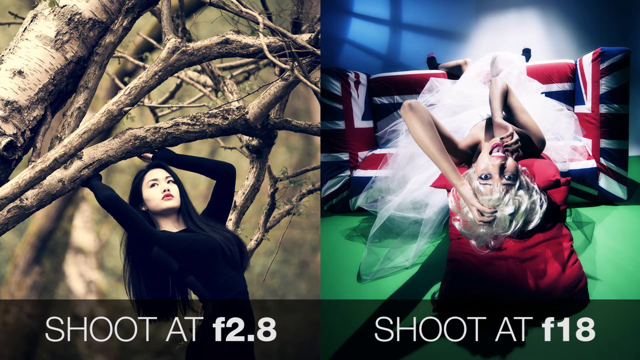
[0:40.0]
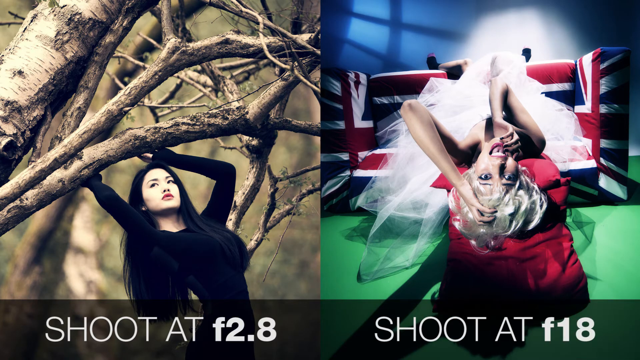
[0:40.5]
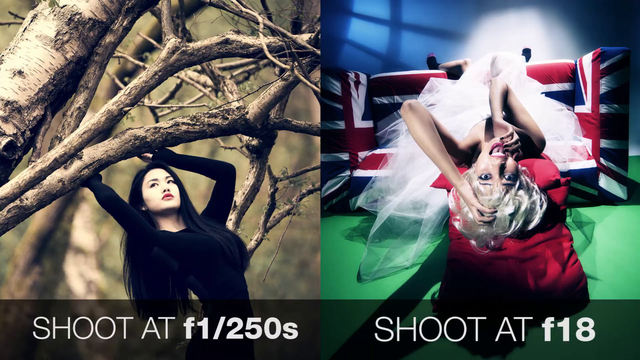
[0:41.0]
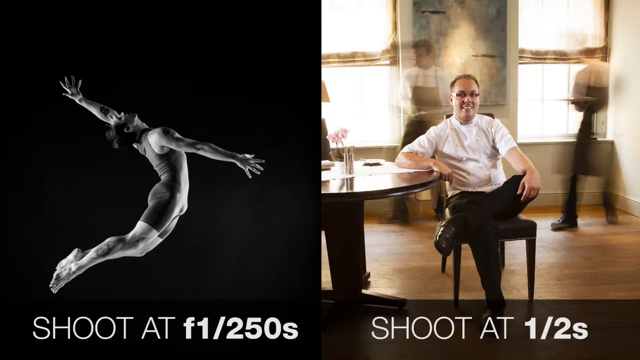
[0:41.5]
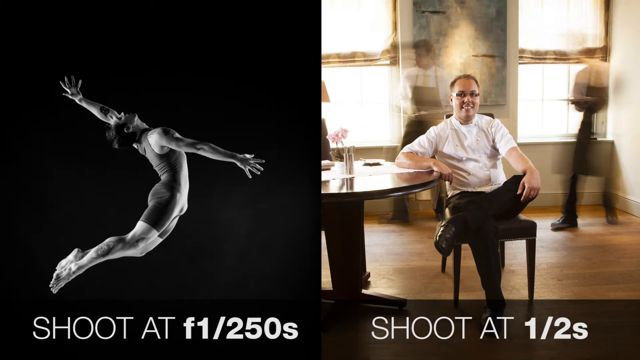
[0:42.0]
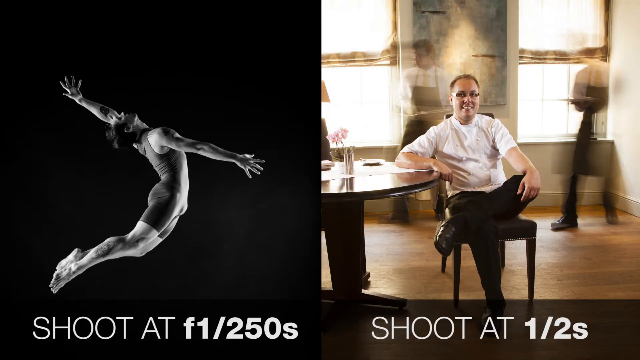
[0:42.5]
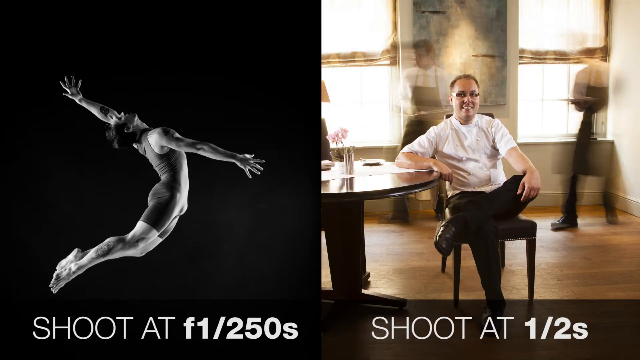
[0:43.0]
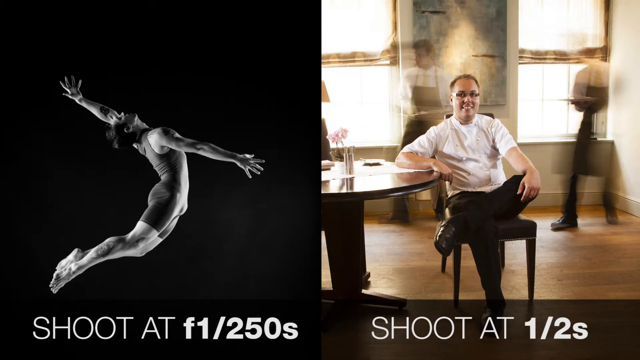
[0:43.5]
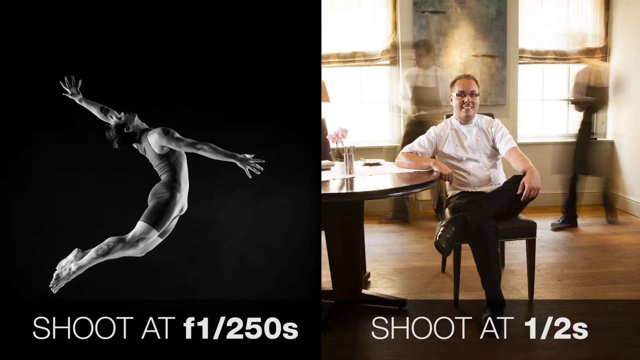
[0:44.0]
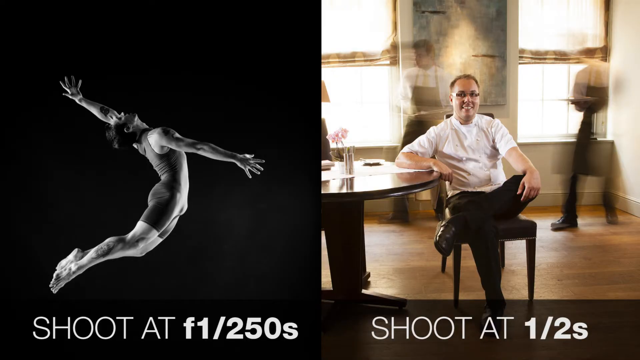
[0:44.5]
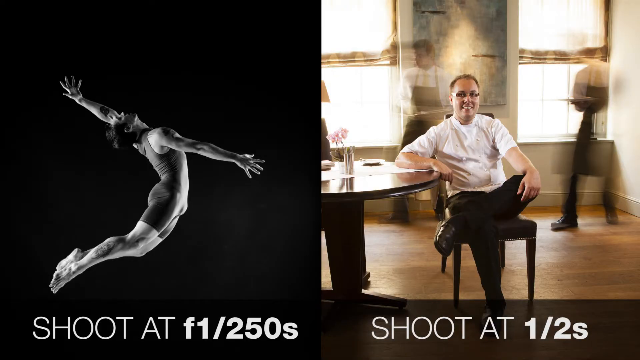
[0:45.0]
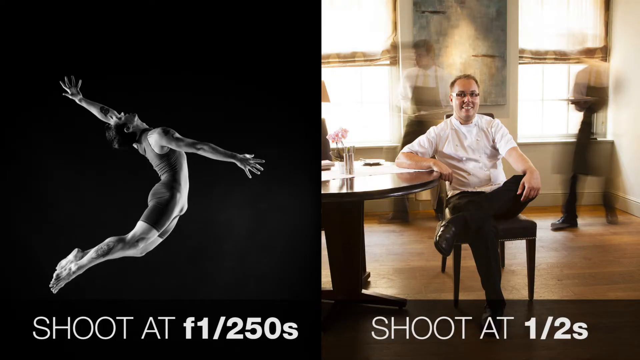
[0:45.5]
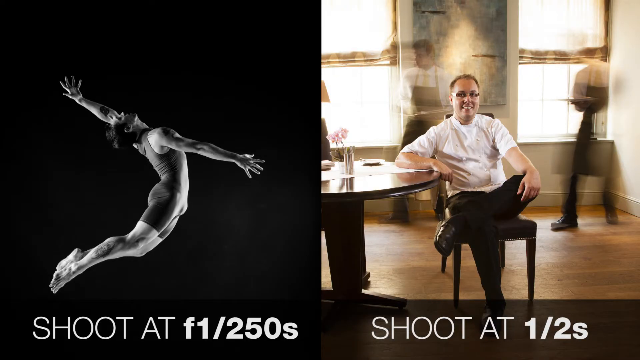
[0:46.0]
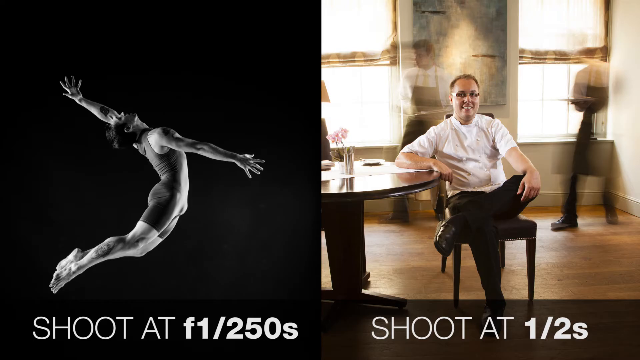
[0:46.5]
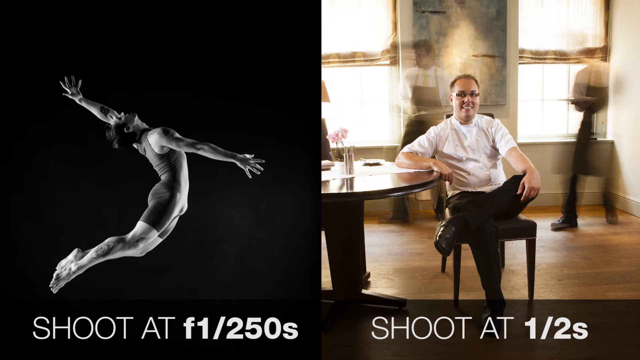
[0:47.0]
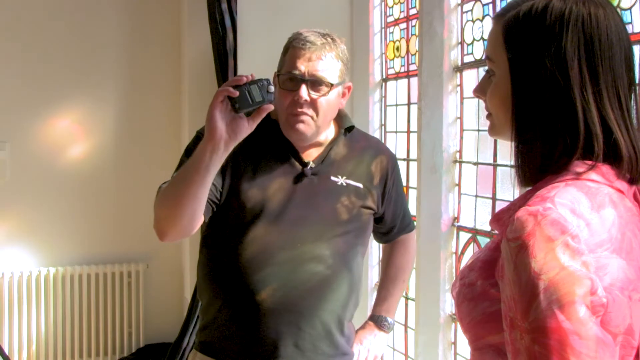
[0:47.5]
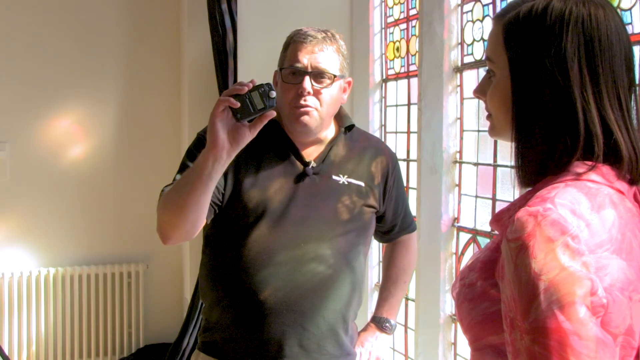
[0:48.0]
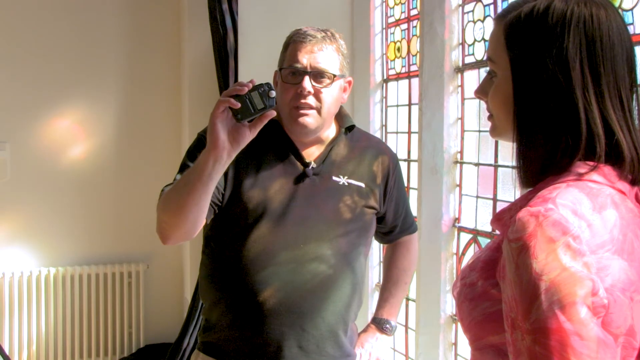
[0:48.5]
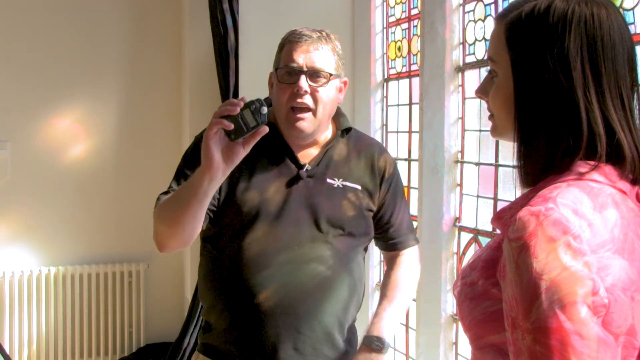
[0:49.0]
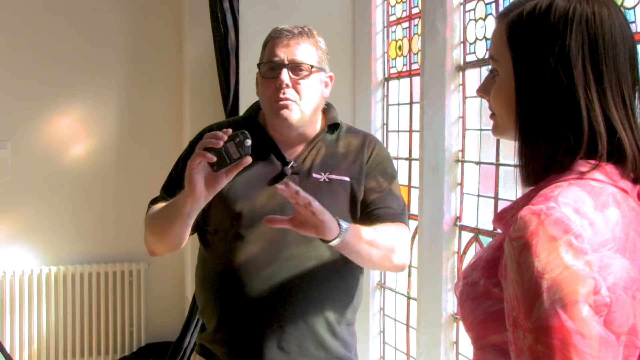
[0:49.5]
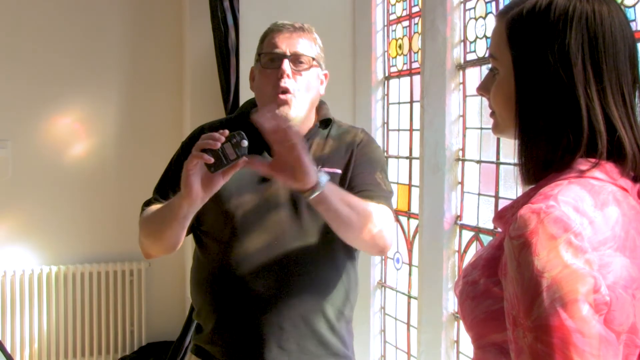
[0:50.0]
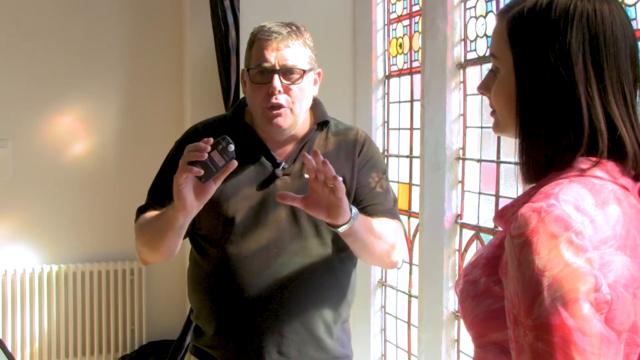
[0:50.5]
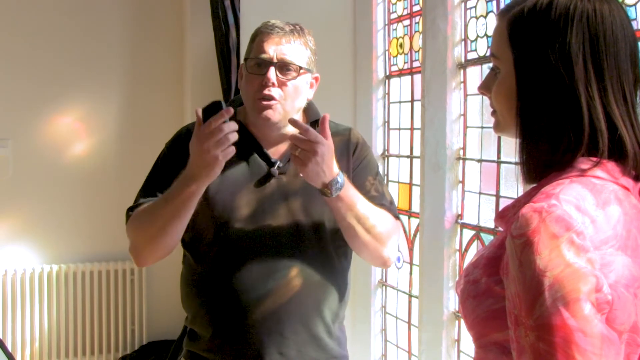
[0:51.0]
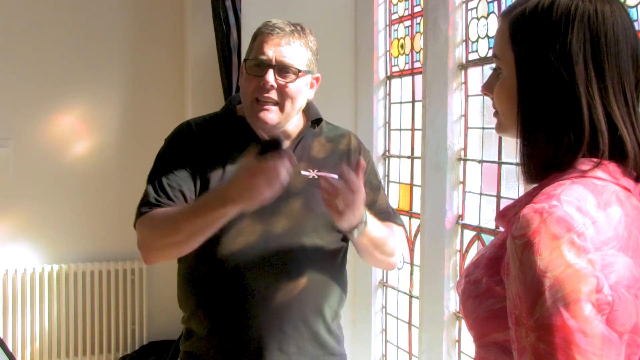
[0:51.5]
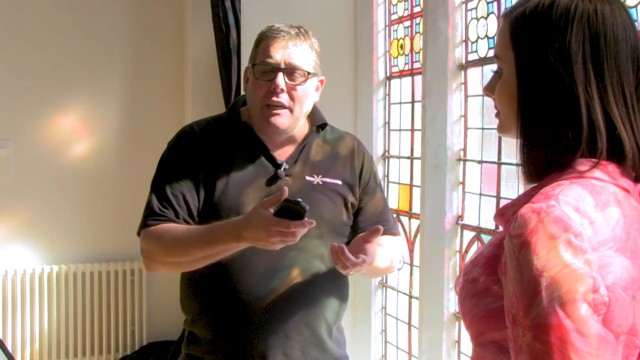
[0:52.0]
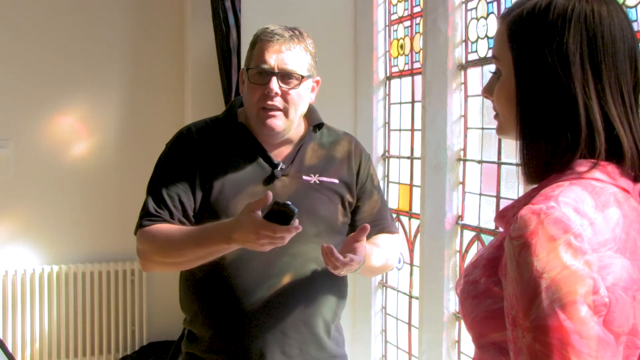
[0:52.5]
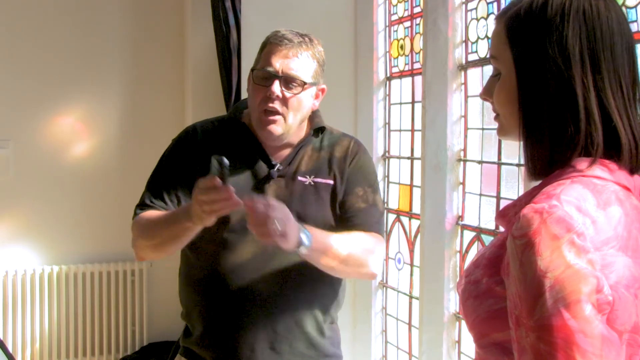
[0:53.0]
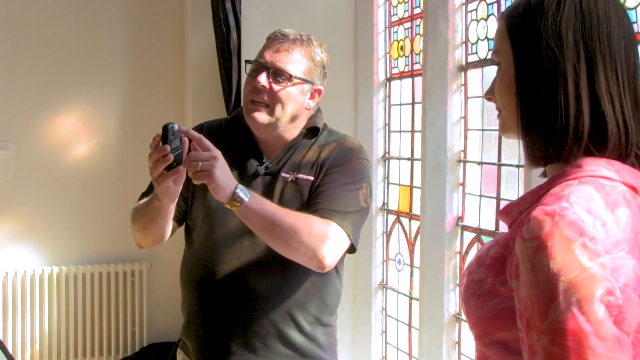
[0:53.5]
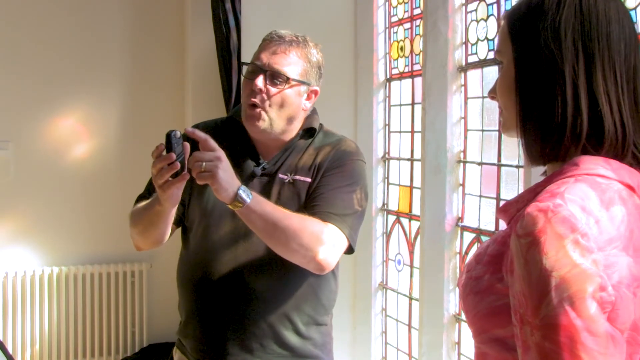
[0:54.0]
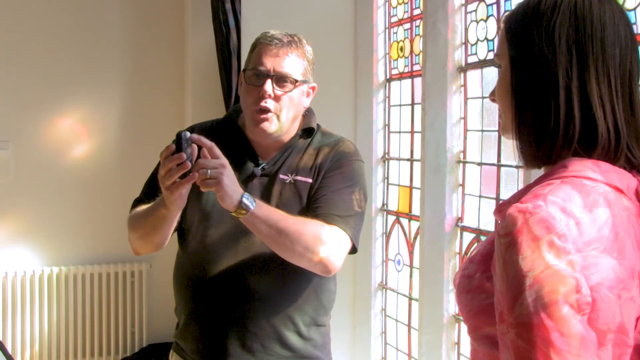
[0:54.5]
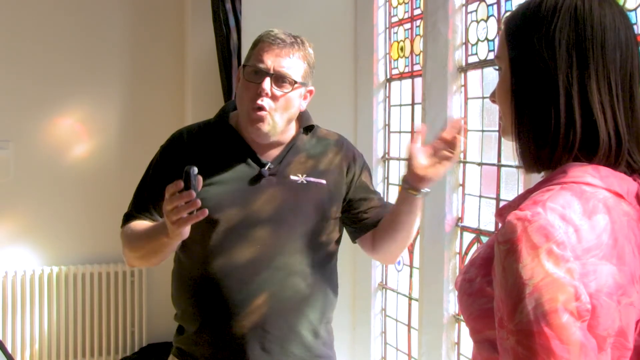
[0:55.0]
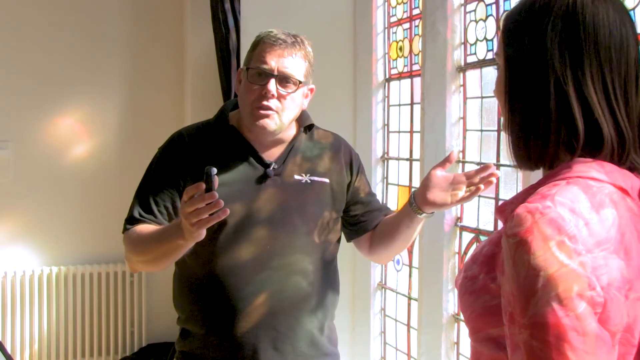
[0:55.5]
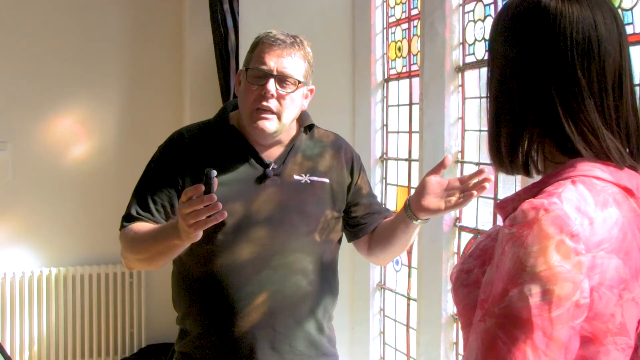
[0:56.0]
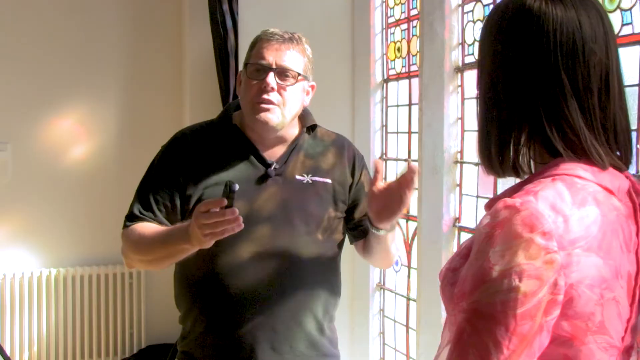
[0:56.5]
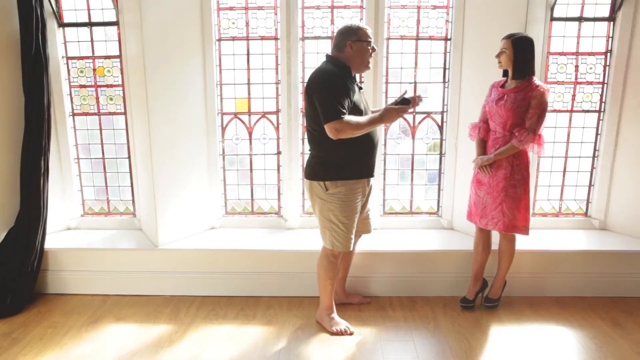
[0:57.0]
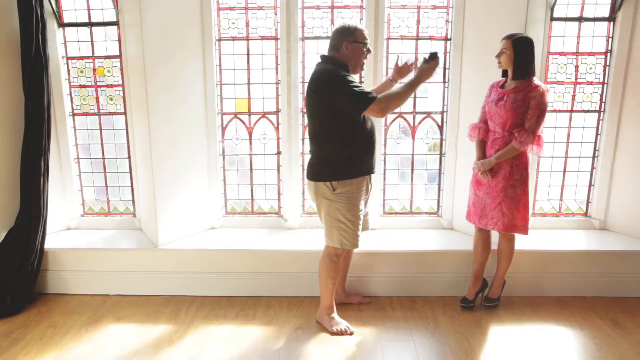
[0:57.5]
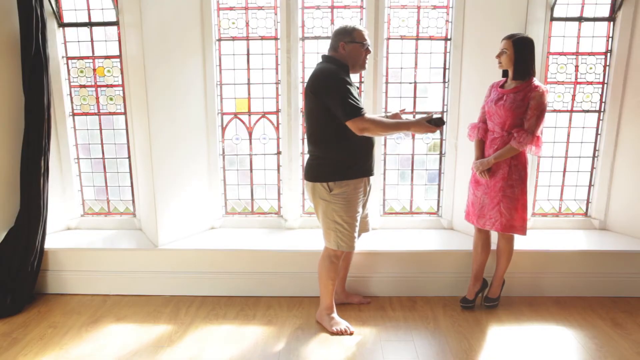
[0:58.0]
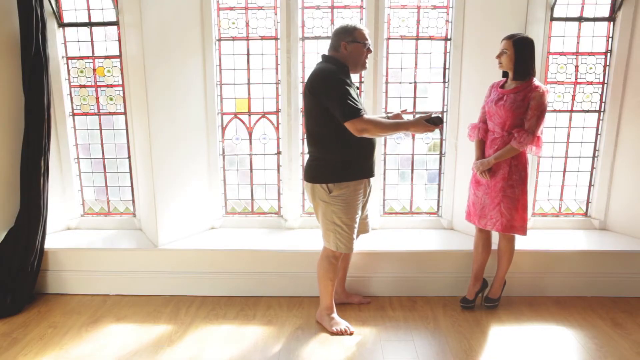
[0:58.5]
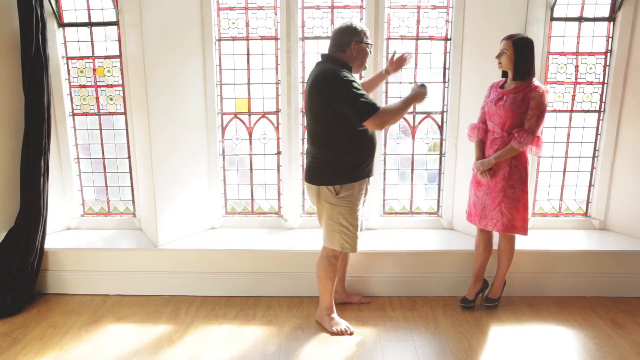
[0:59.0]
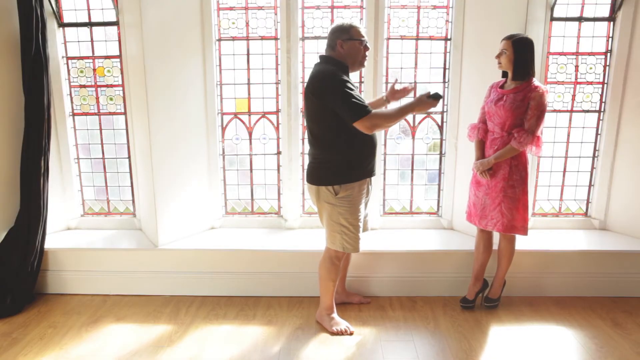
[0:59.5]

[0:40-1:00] A second set of photos appears. The first is very dark and shadowy, showing a man in a leotard jumping in the air, all stretched out, his muscles visible in detail in the shadows. Underneath it reads "shot at f1-250s." On the right is another photo of a man sitting at a table; behind him is the blurred movement of what looks like a server in a white dress shirt and a black apron, his shadow just barely visible moving around the room. Underneath it reads "shot at 1/2s." The video then moves to the man and the woman in another room in front of some stained-glass windows. She stands there quietly while he holds the device, moving it and his hands around and talking animatedly about it. The camera backs up, showing the stained-glass windows behind them more fully, and she looks at him as he talks about the device.